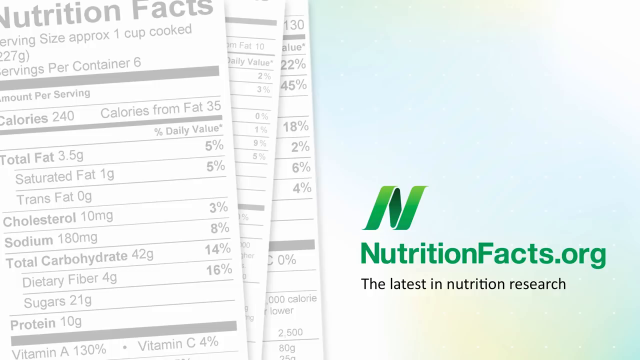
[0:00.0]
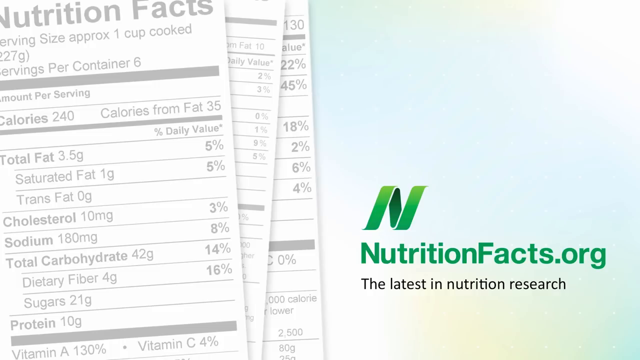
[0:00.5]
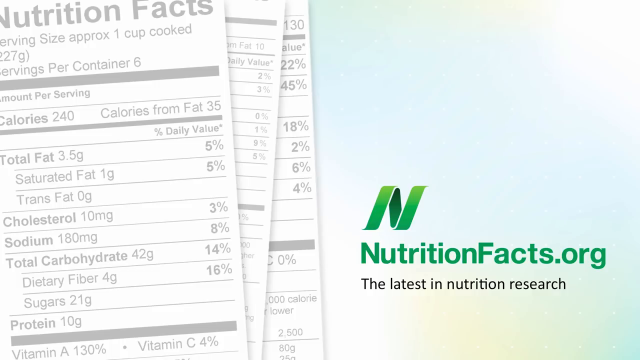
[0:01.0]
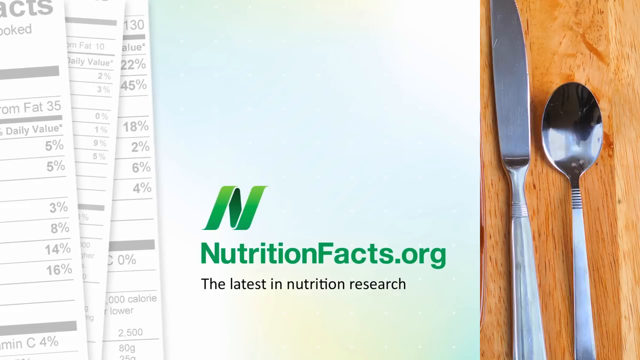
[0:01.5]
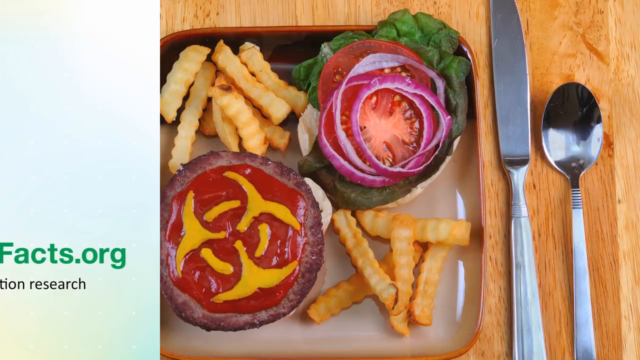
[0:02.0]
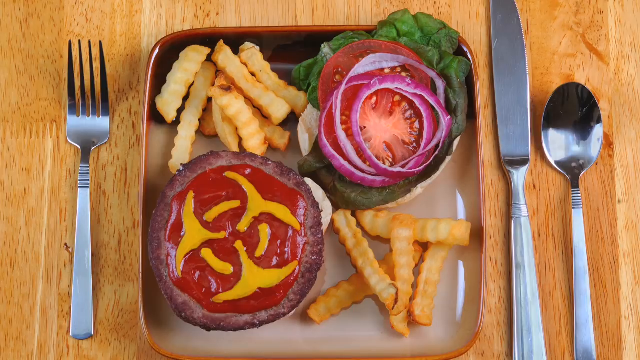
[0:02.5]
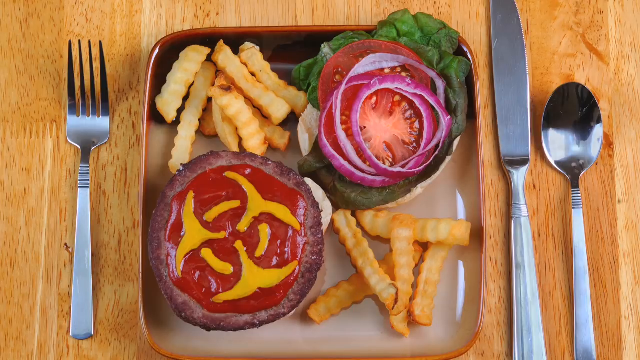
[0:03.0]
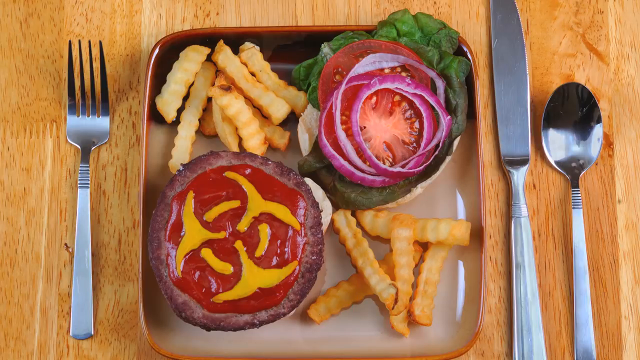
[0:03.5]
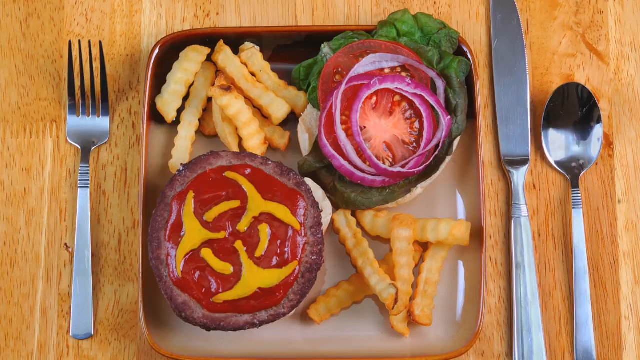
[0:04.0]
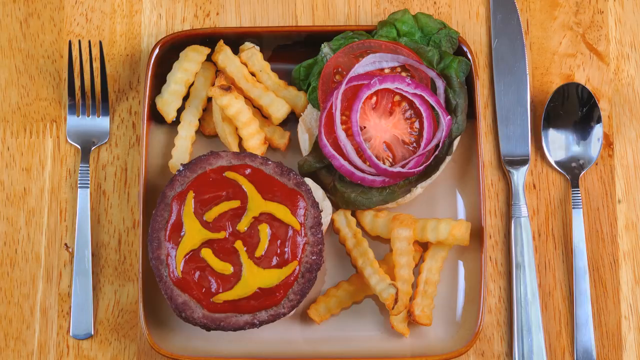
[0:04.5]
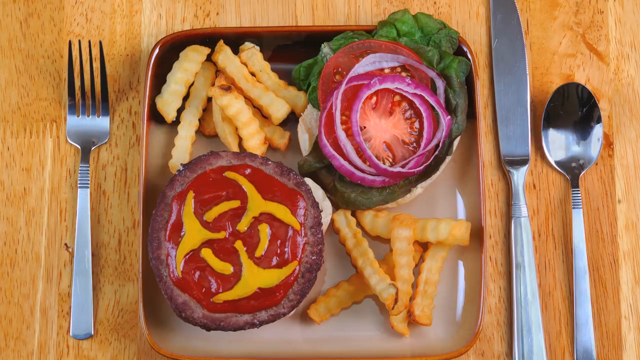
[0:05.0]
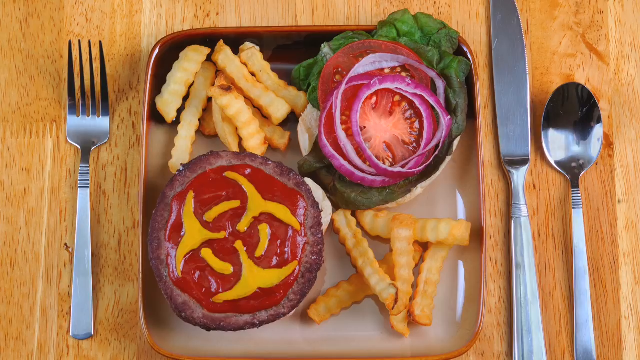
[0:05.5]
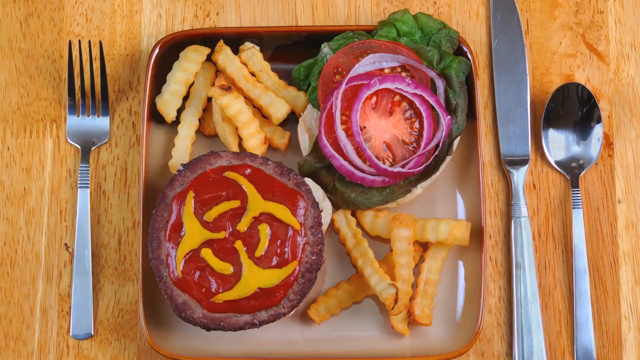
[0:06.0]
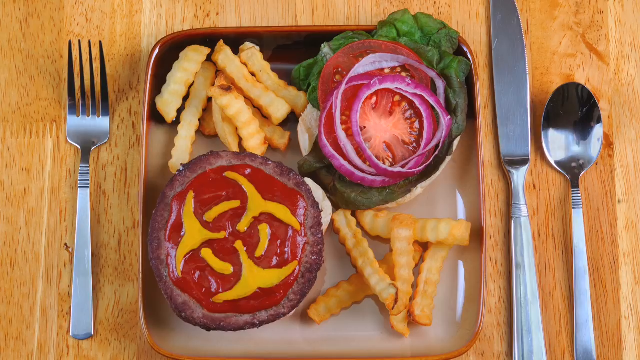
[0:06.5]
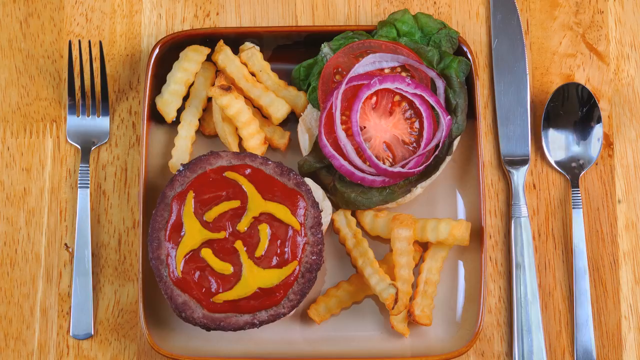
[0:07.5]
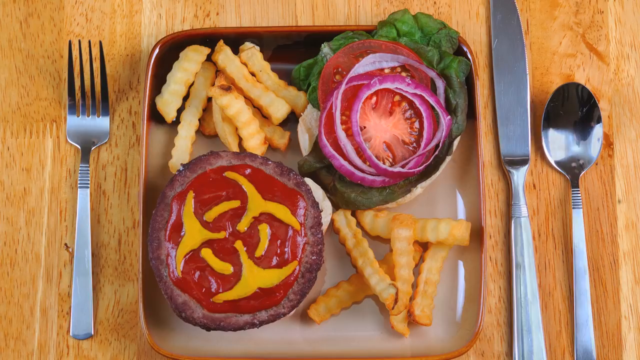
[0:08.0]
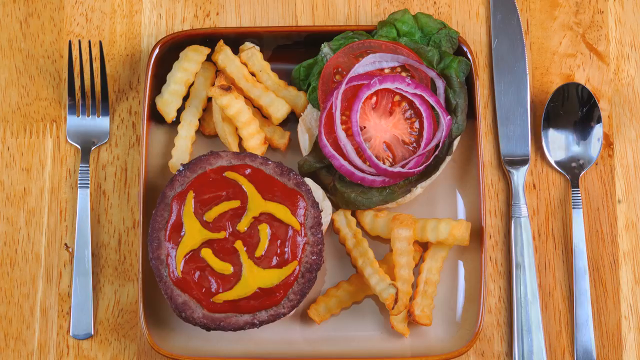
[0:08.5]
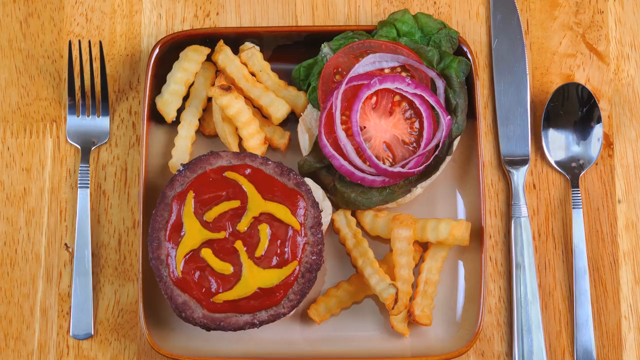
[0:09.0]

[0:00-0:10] A spinning screen shows "nutritionfacts.org" in a green font along with some faded nutrition facts labels. The screen swipes to a square plate holding fries and a burger topped with ketchup, mustard, lettuce, tomato, and onion. A fork is on the left-hand side of the plate, and a knife and a spoon are on the right-hand side. The plate is resting on a wooden table. The silverware is silver and looks clean, and the fries are golden brown.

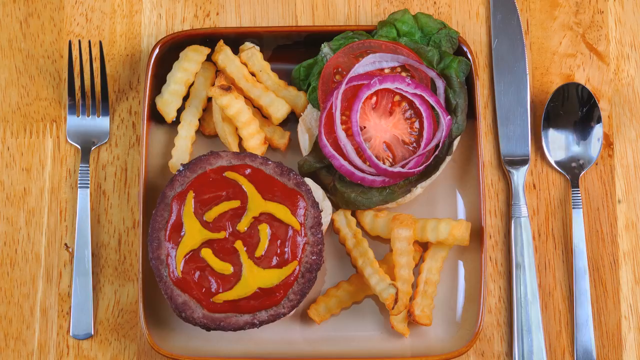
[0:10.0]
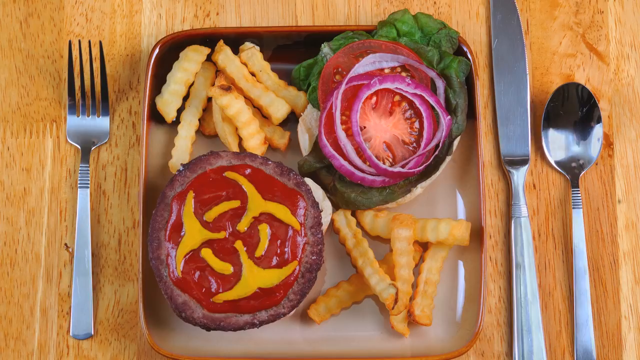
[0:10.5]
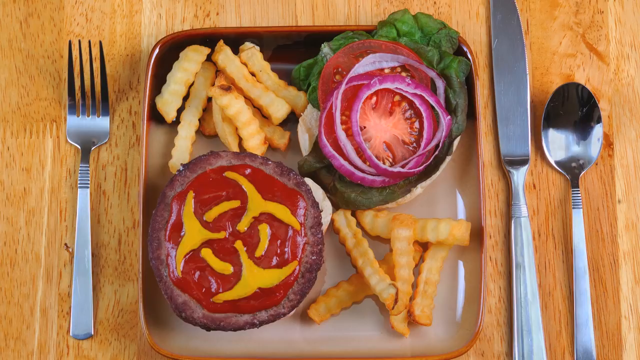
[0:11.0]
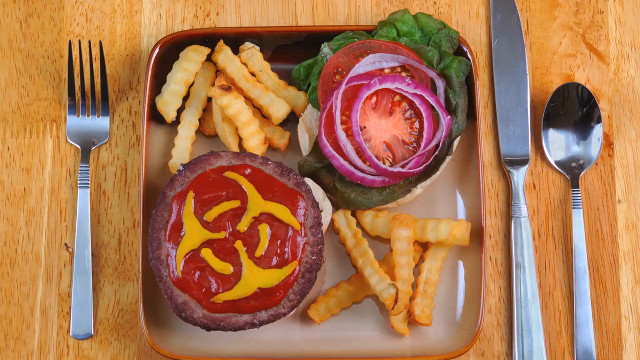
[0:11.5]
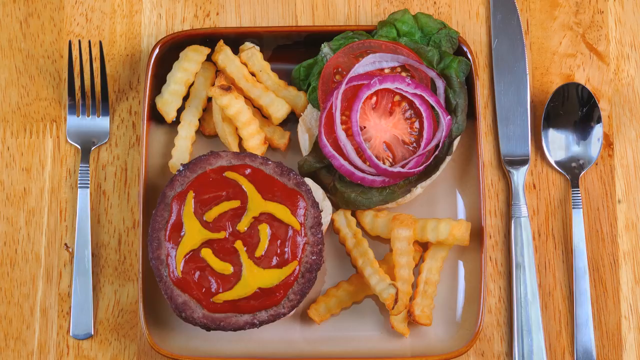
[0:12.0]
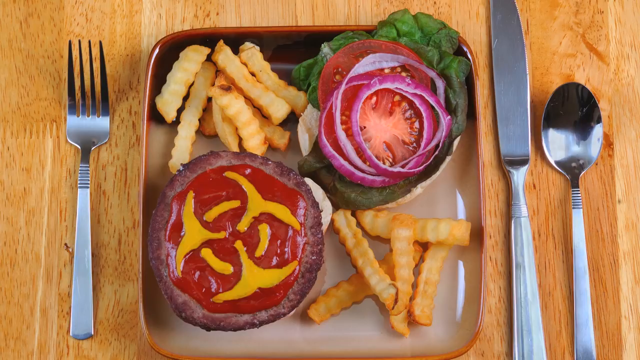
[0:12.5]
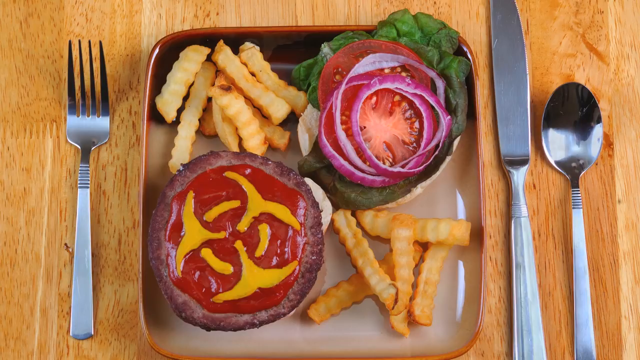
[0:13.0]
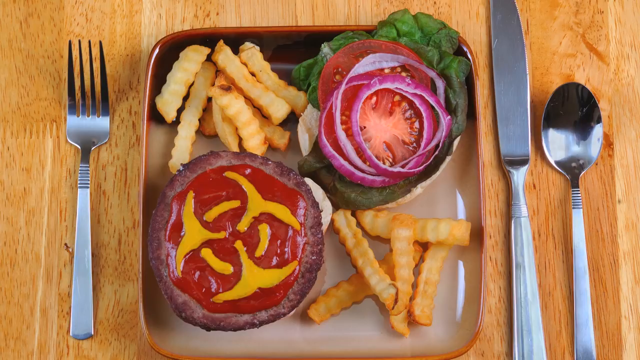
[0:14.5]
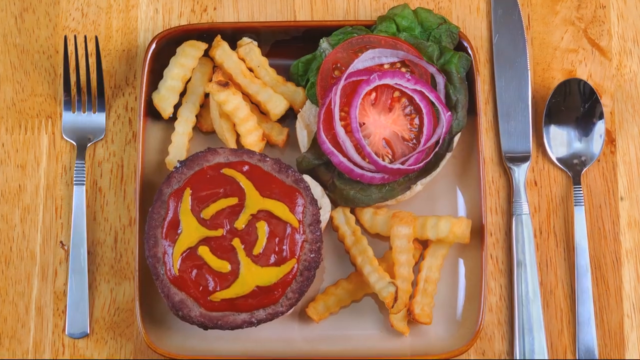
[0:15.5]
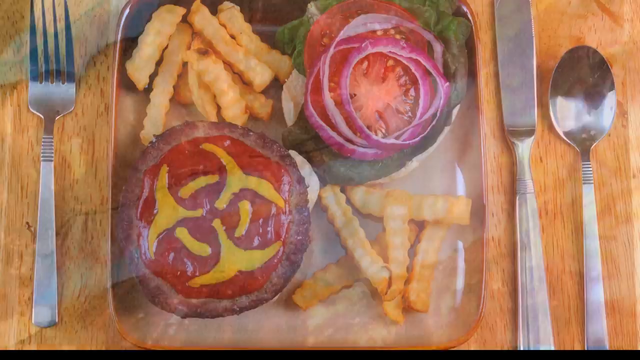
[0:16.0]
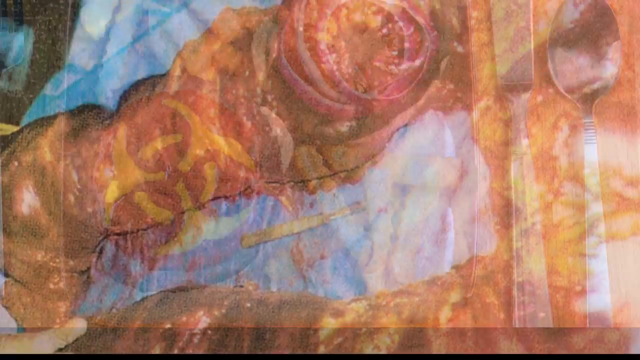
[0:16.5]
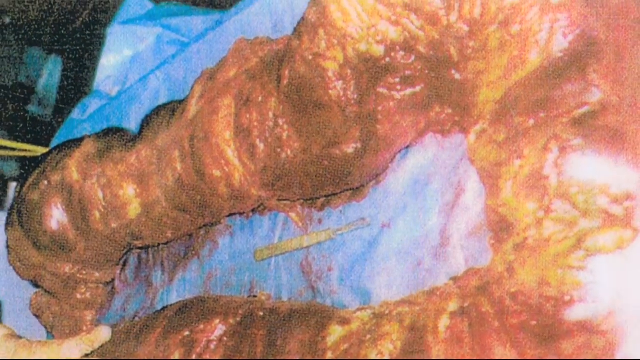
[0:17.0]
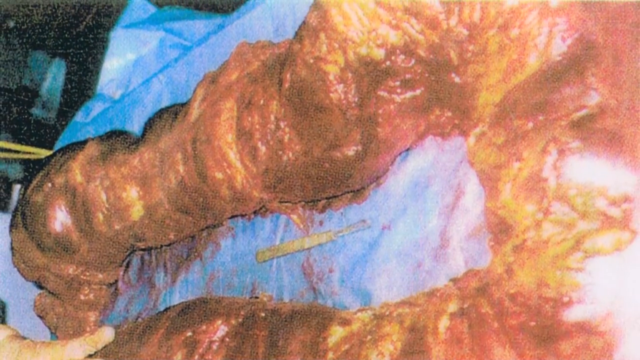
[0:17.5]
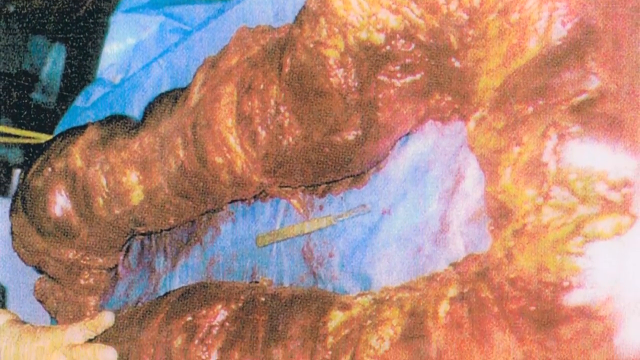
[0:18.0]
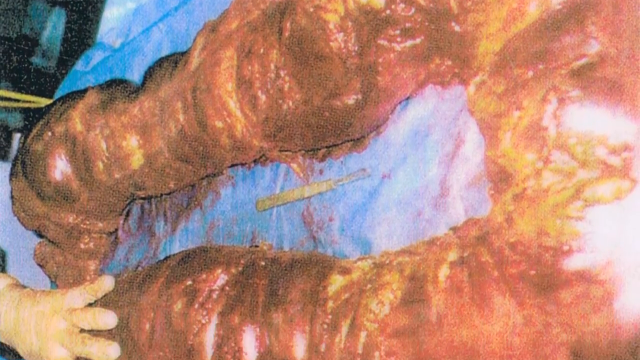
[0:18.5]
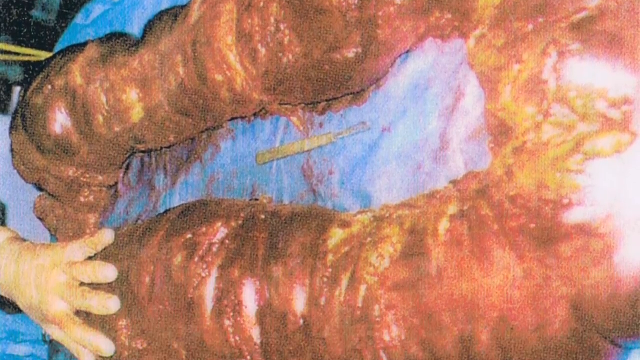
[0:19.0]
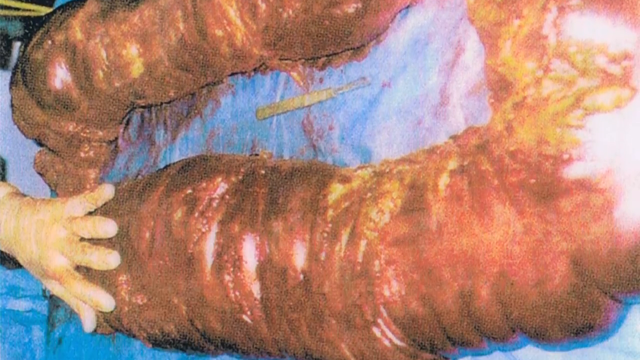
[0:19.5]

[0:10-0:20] A square plate holds a burger and fries. The burger has mustard and ketchup on the meat patty, along with onions, tomatoes, and lettuce. There are two small piles of fries. A fork is on the left-hand side of the plate, and a knife and a spoon are on the right-hand side. The plate and the silverware are resting on top of a wooden table. Then a strange shape appears that looks like an inside part of a large animal, with a human hand touching it at the bottom. It looks like it is post-surgery.